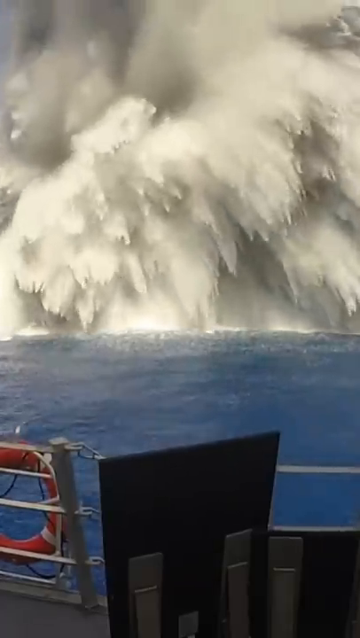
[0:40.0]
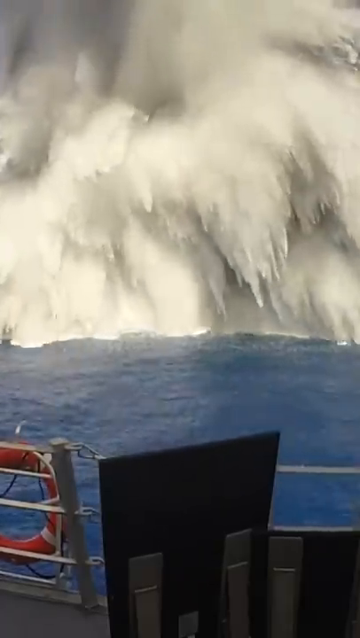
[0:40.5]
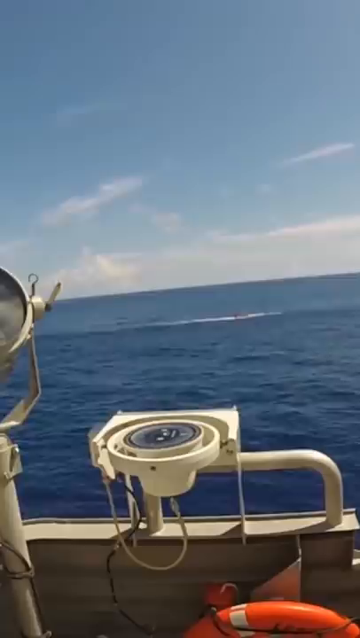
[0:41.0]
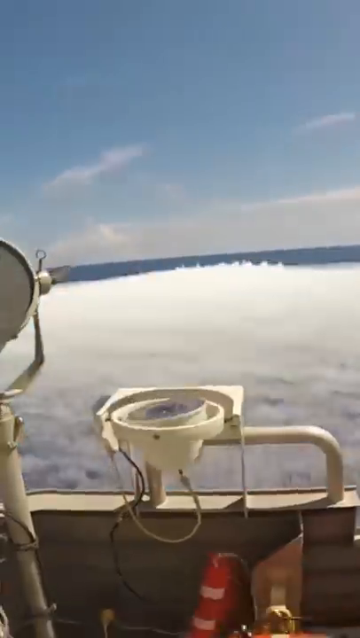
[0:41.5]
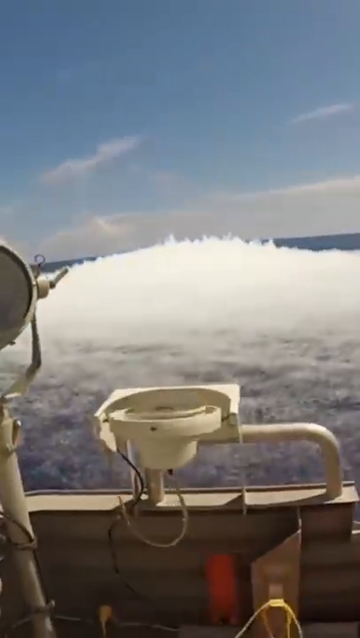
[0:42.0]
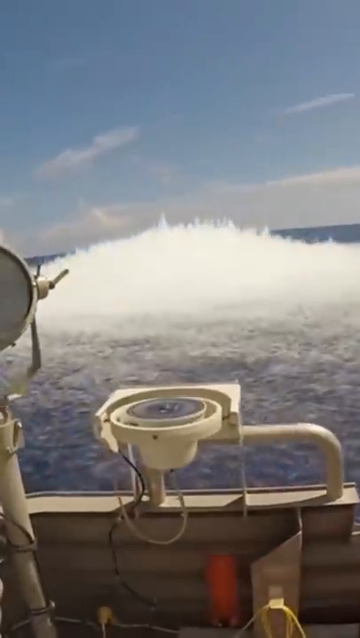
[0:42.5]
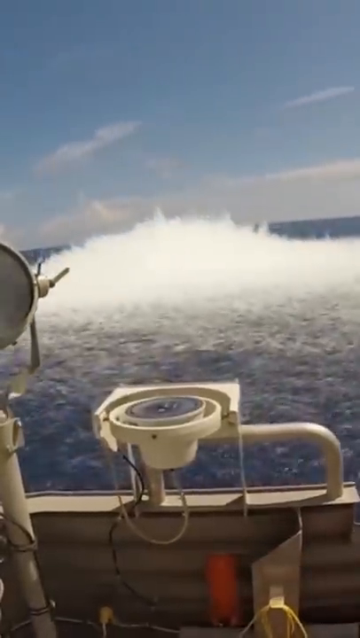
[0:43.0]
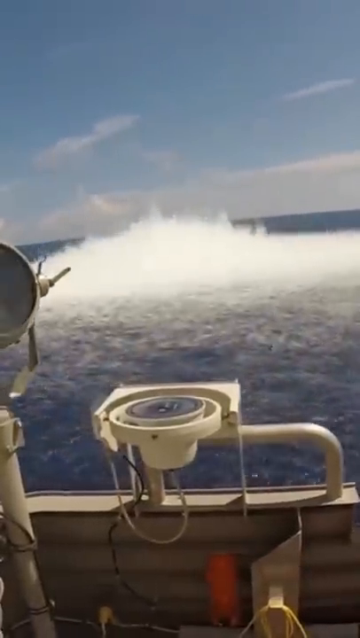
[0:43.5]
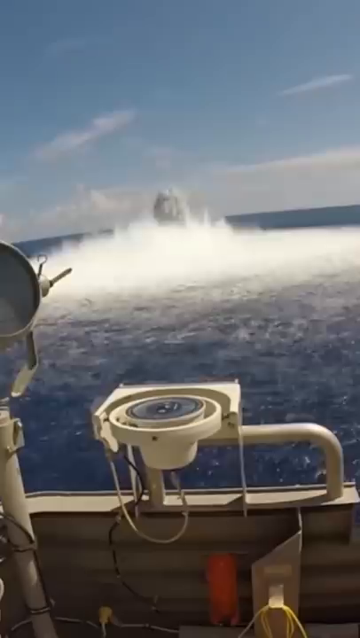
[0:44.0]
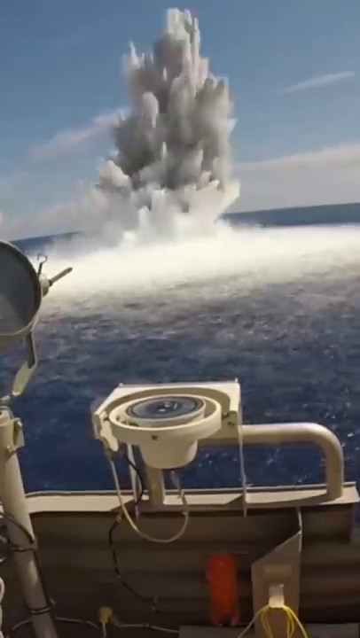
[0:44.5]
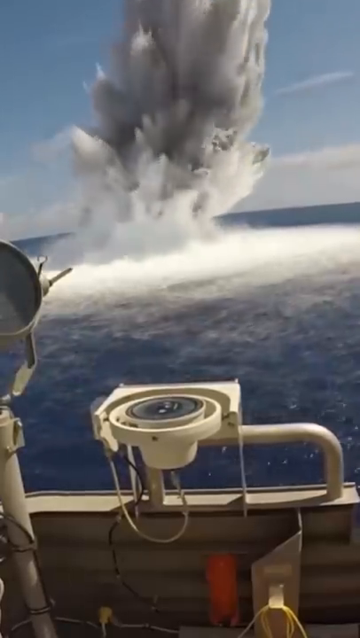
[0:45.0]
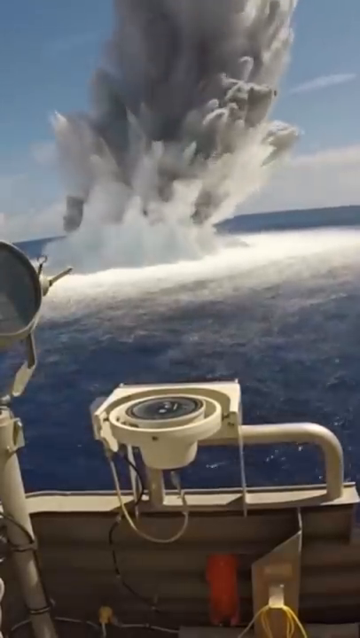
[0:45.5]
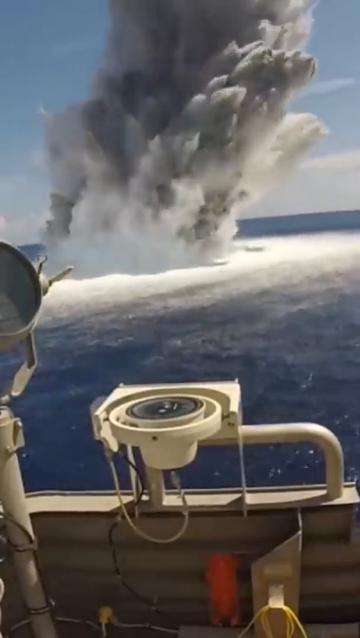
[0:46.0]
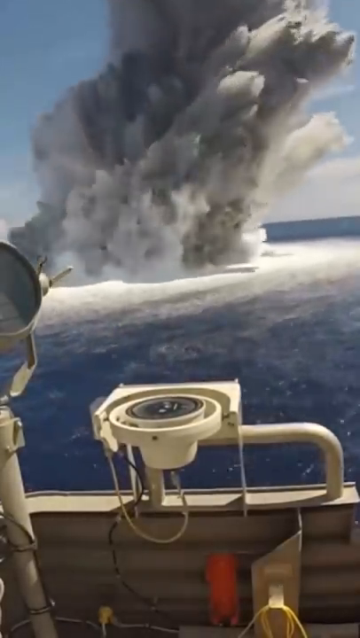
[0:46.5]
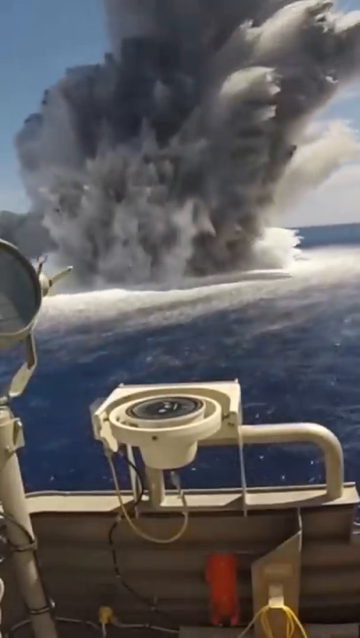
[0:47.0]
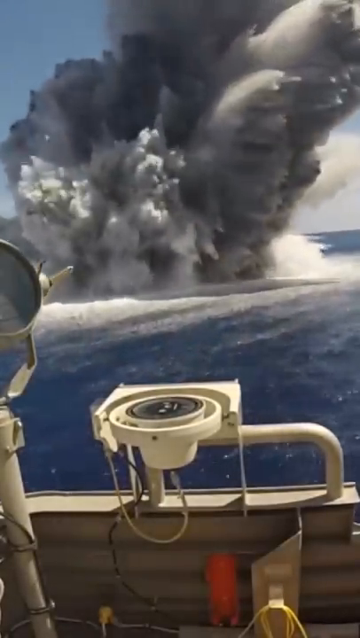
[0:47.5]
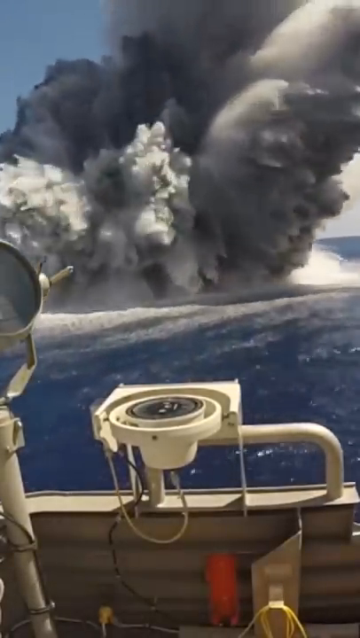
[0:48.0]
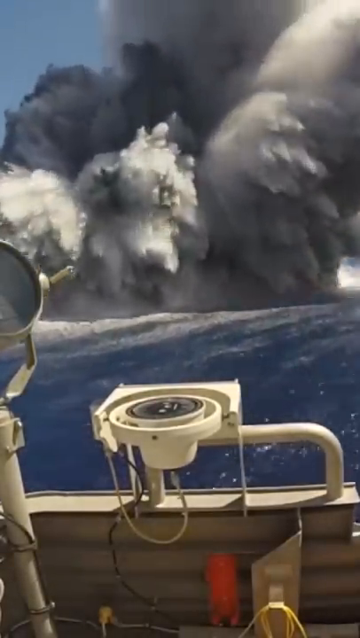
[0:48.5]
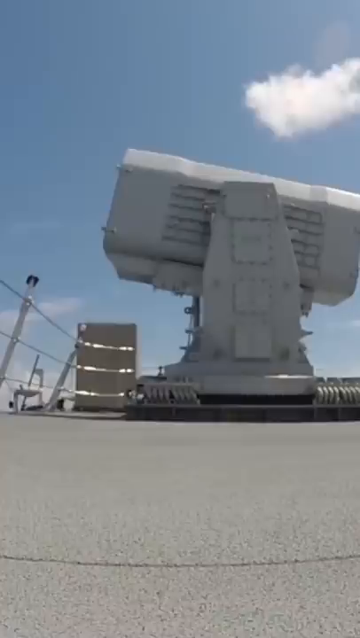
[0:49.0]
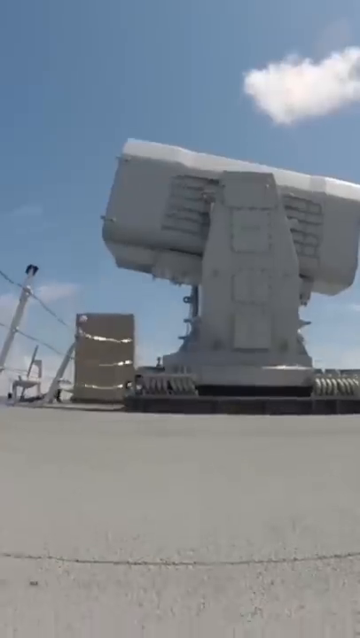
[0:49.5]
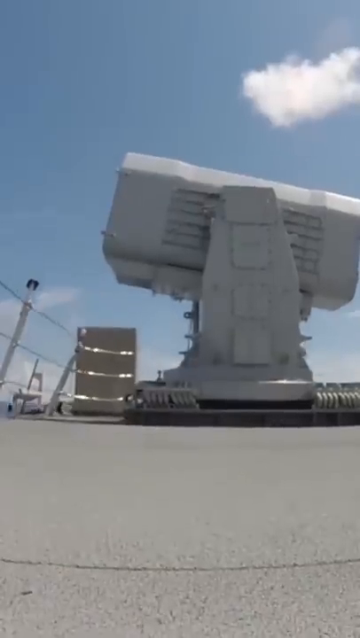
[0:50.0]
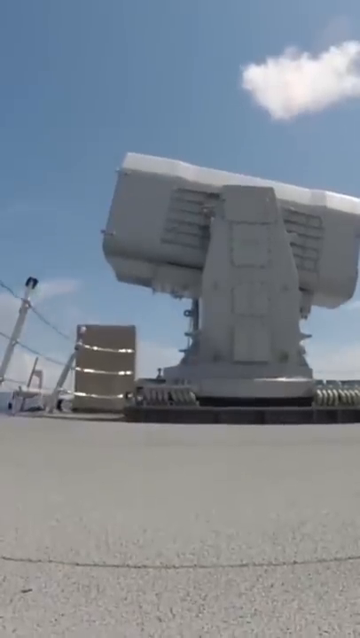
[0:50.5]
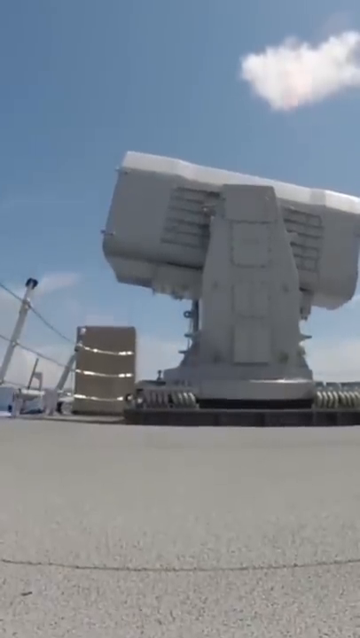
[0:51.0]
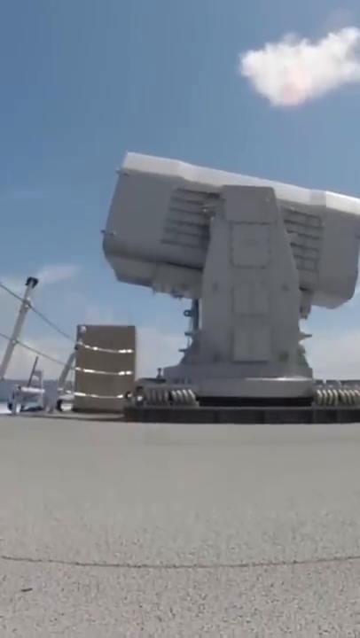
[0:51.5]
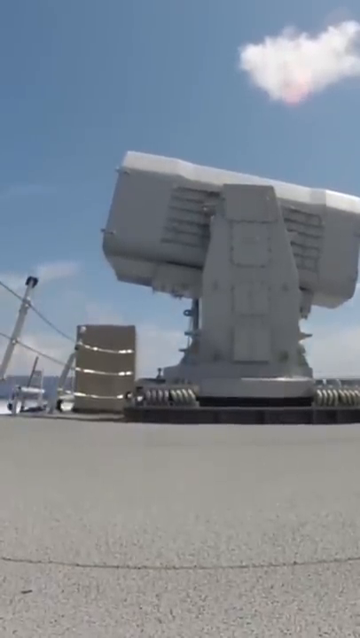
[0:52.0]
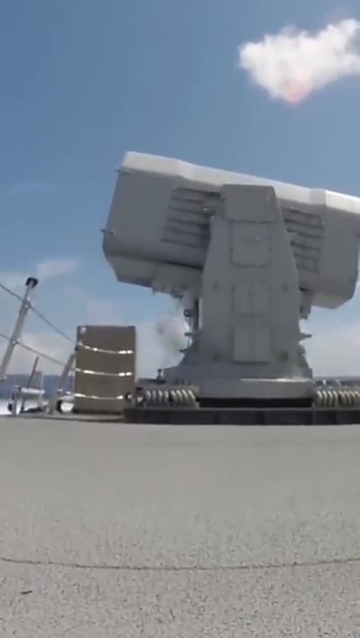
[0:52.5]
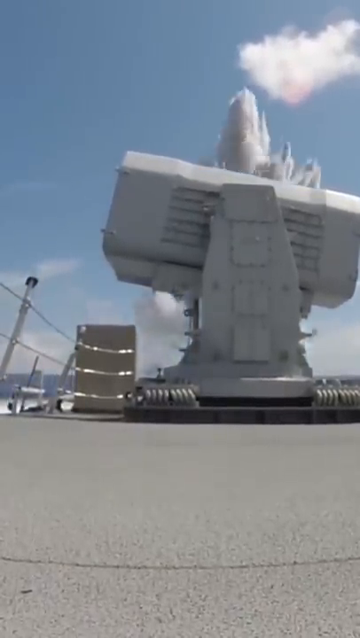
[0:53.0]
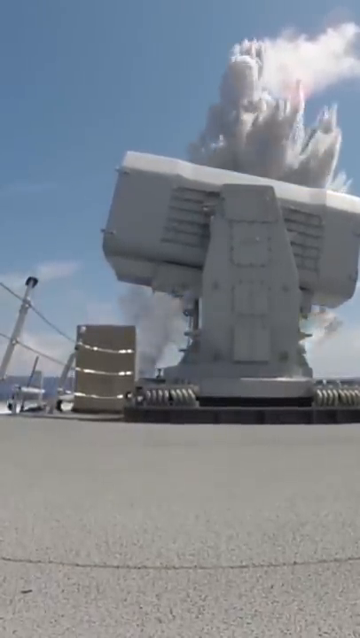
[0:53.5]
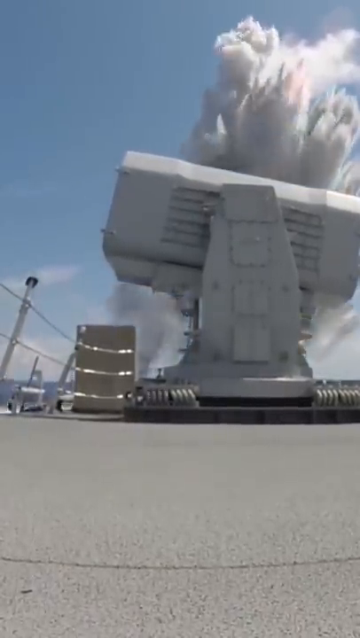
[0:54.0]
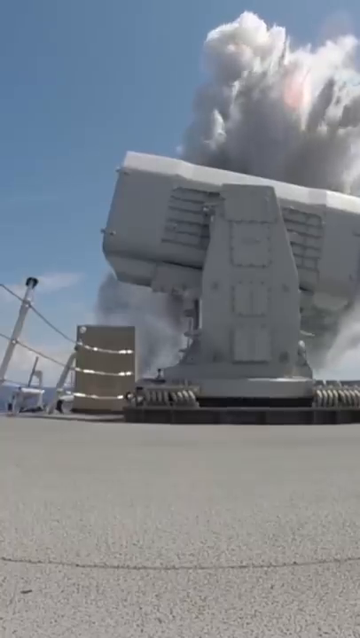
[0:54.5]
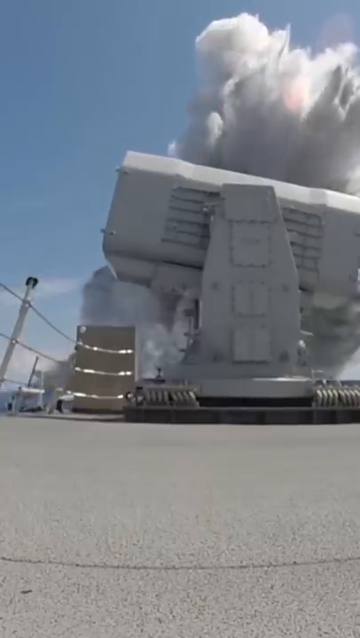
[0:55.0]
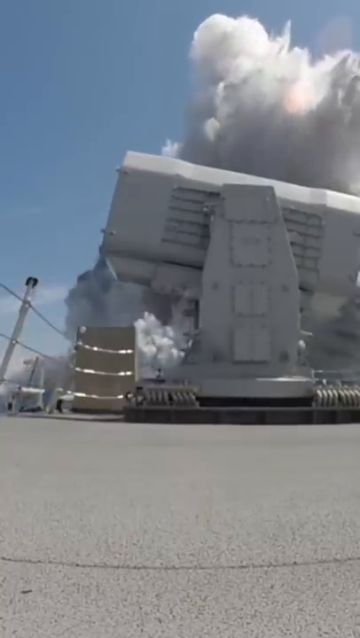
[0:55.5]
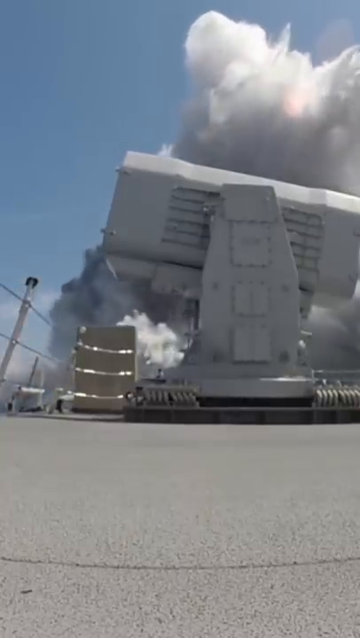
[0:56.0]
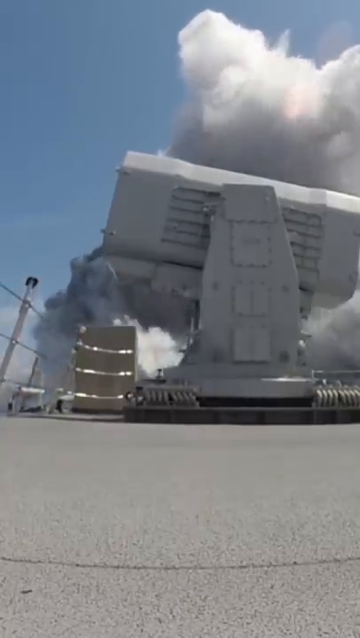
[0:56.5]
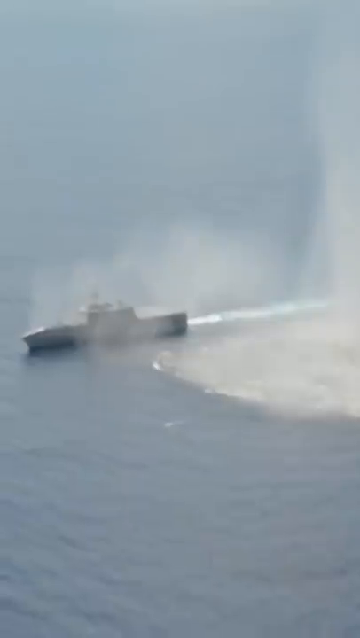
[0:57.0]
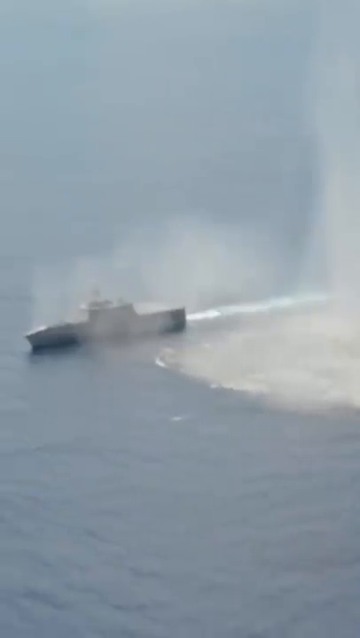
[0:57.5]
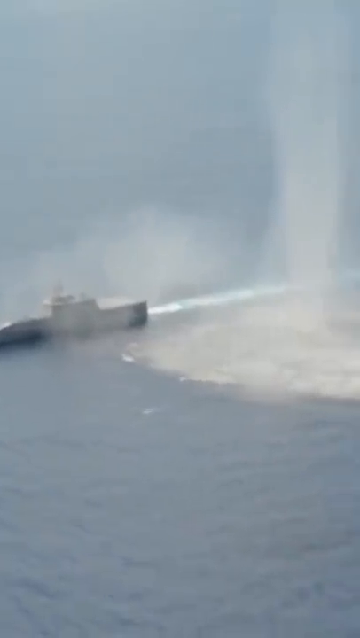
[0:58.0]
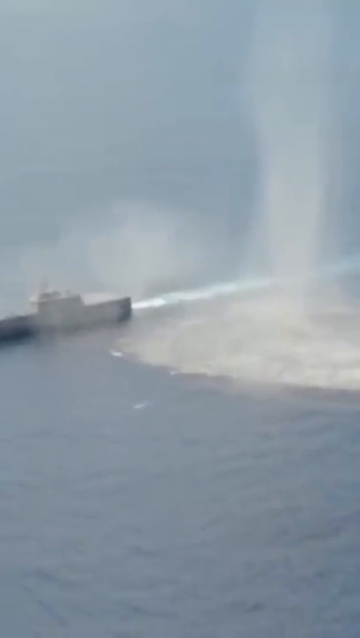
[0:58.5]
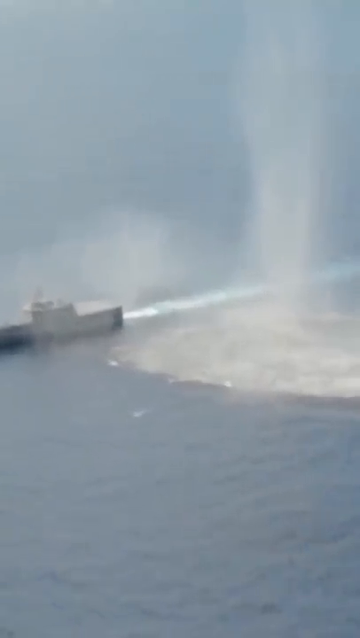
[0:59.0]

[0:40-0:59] The shot starts on the side of the vessel; out in the blue water there is only something very small on top of the water, seemingly no larger than a life raft. Then comes the huge detonation under the water, which shakes the ship and the camera. As the boiling white water begins to subside, plumes of water come up from inside the ocean and break the surface into the air, displacing a tremendous amount of water. The view moves just slightly down the side of the ship to instruments attached to it: cameras, some sort of recording instruments, and something that appears to be gently suspended in a holder. As the first detonation goes off in the water, the camera shakes like crazy, and the little sensitivity meter shakes very much in its holder before it starts to settle down. When the rest of the explosion breaks the surface of the water, the meter shakes slightly, but nothing like it did upon the detonation under the water.